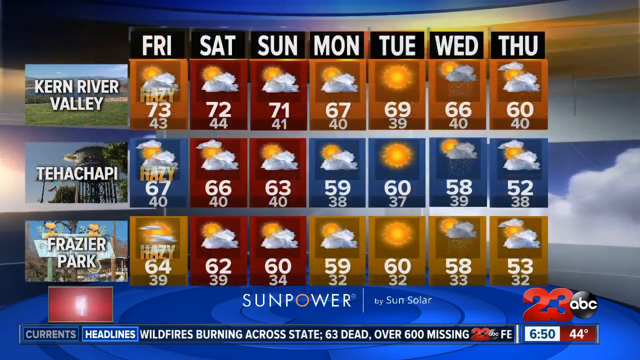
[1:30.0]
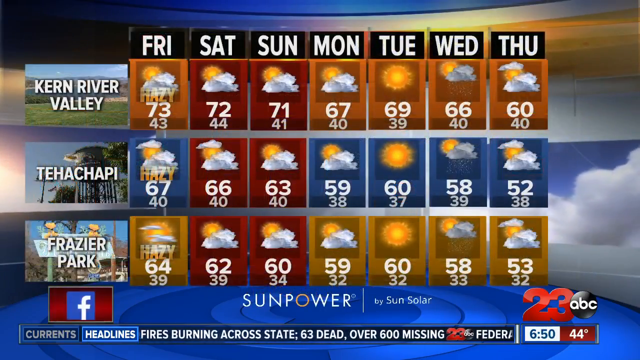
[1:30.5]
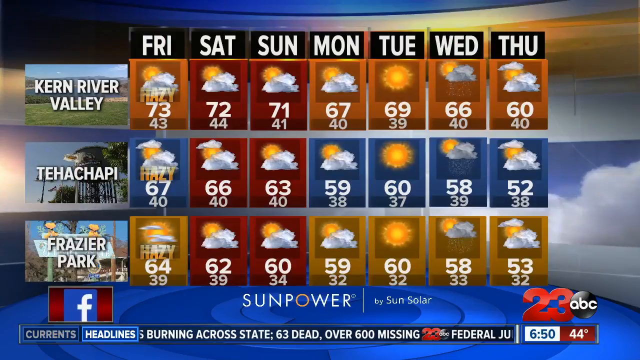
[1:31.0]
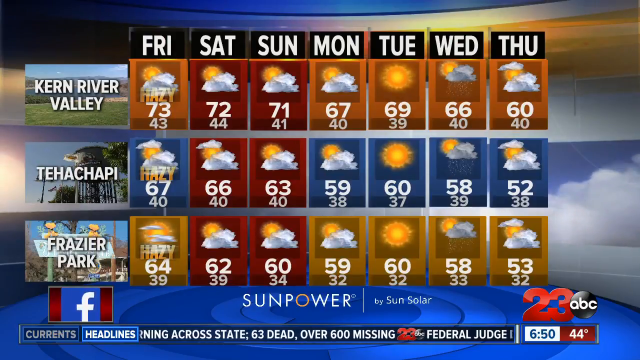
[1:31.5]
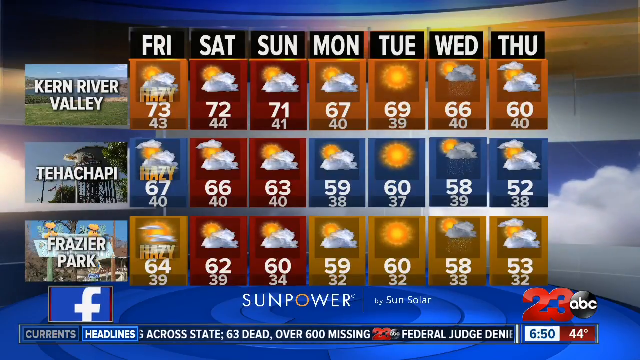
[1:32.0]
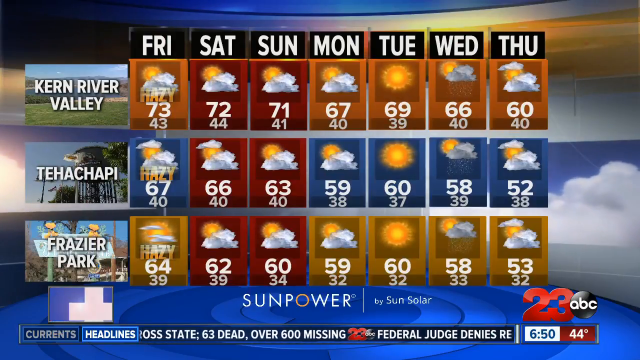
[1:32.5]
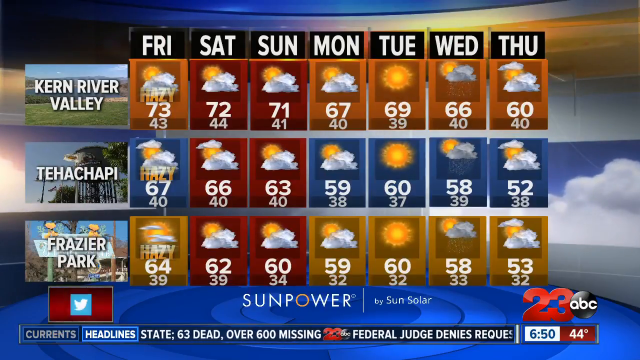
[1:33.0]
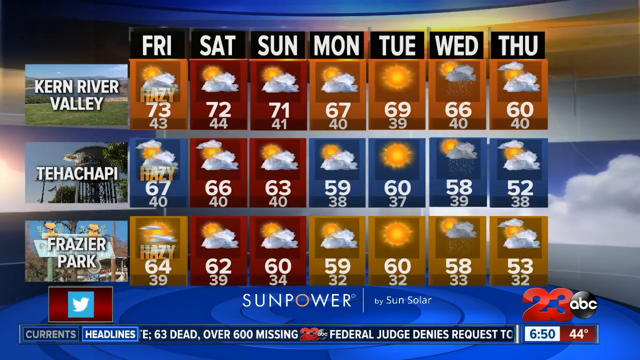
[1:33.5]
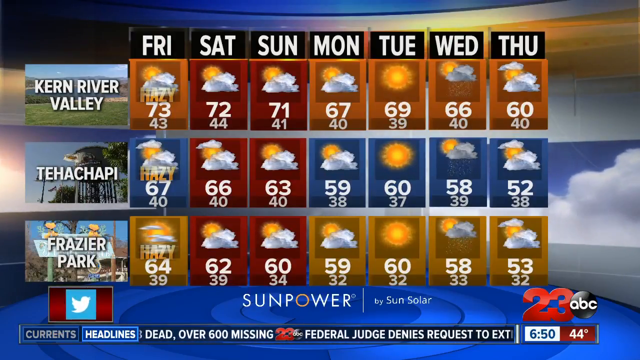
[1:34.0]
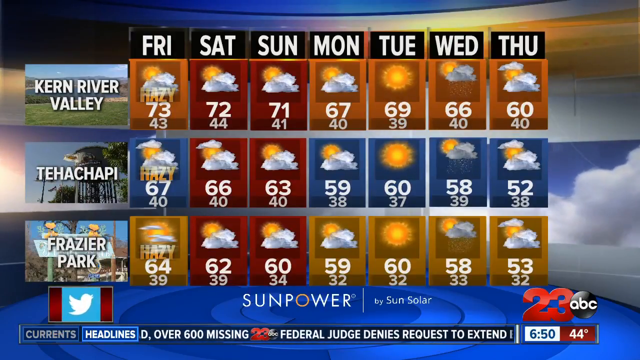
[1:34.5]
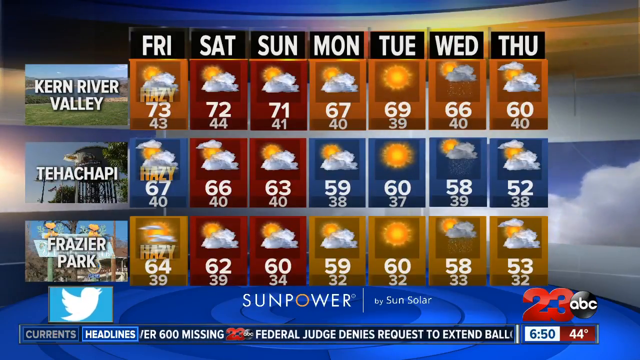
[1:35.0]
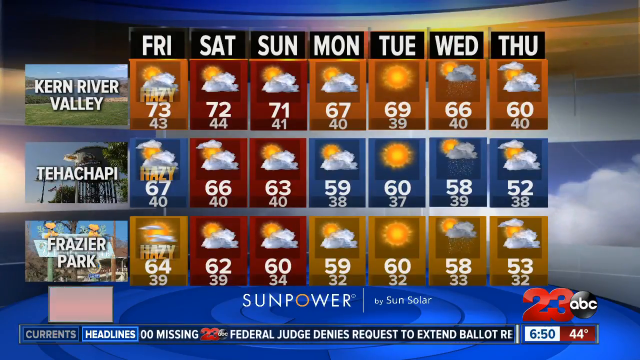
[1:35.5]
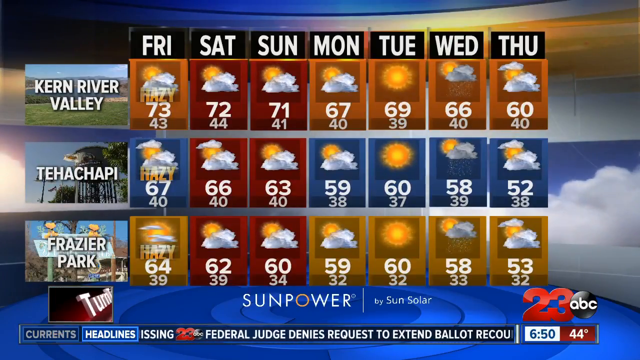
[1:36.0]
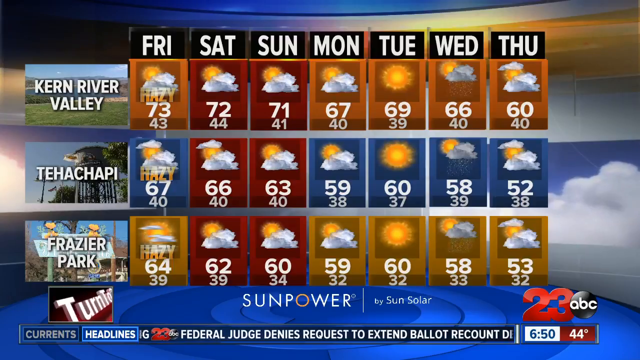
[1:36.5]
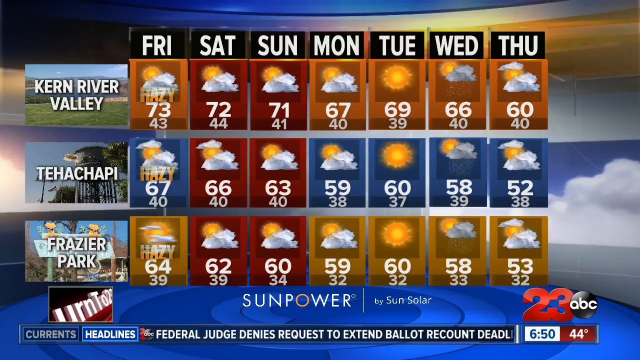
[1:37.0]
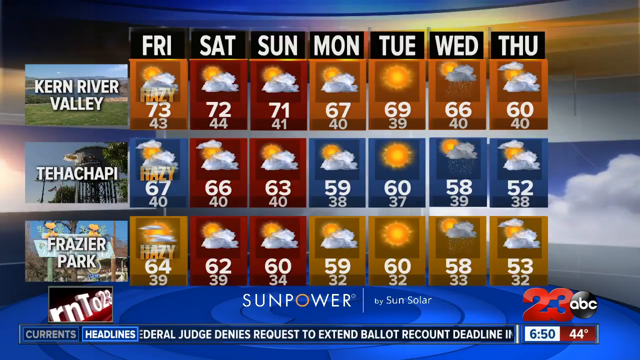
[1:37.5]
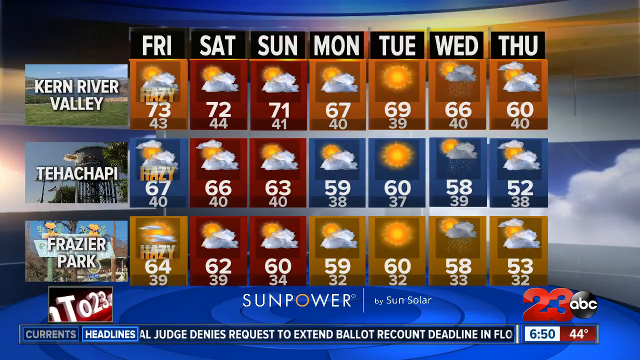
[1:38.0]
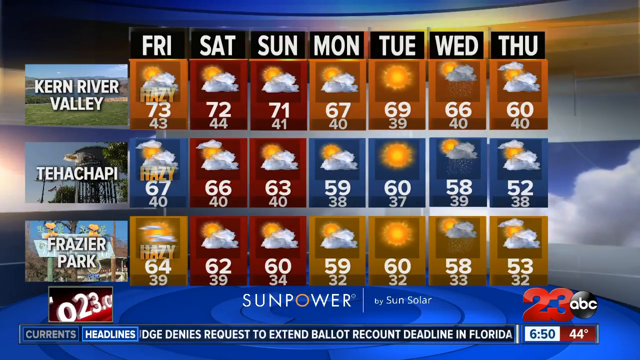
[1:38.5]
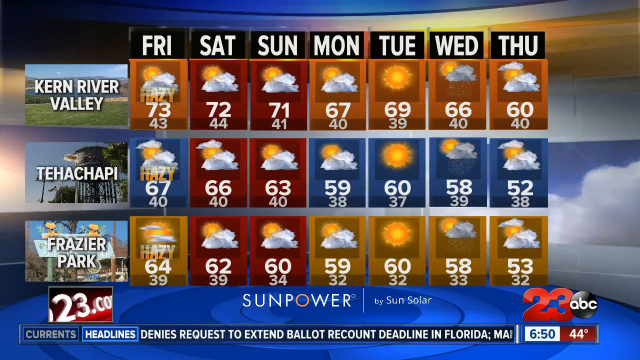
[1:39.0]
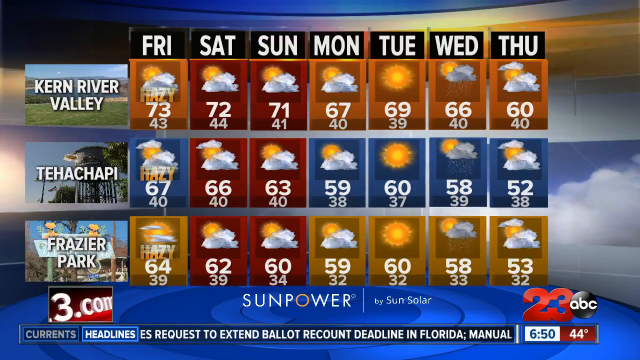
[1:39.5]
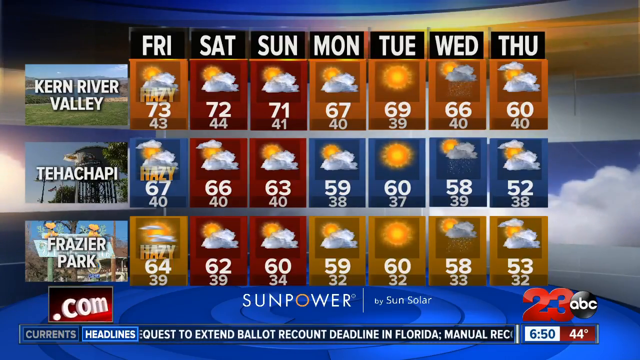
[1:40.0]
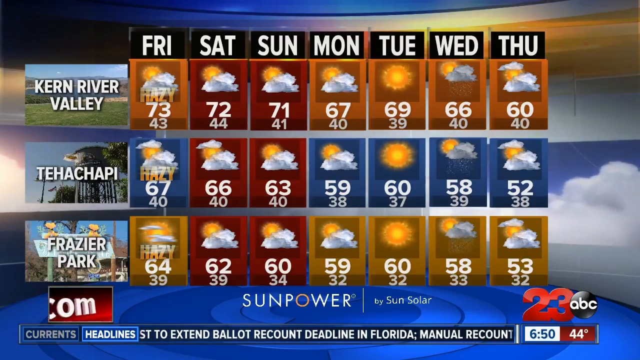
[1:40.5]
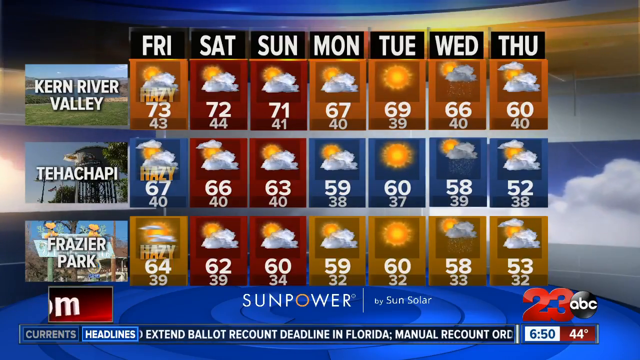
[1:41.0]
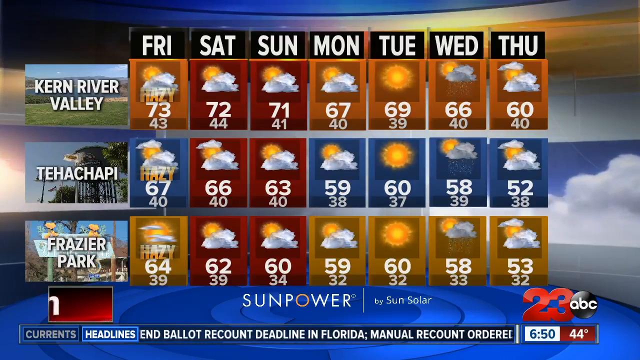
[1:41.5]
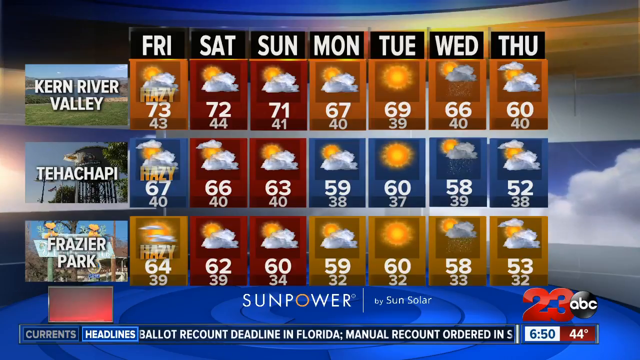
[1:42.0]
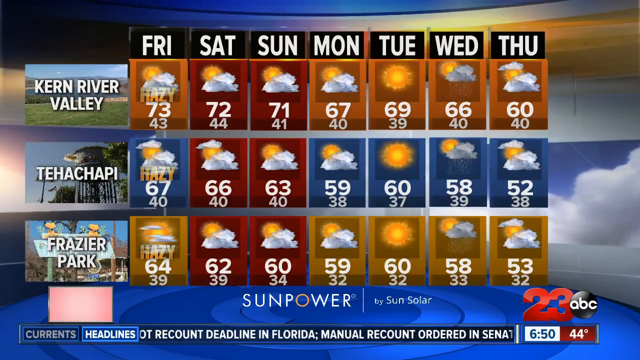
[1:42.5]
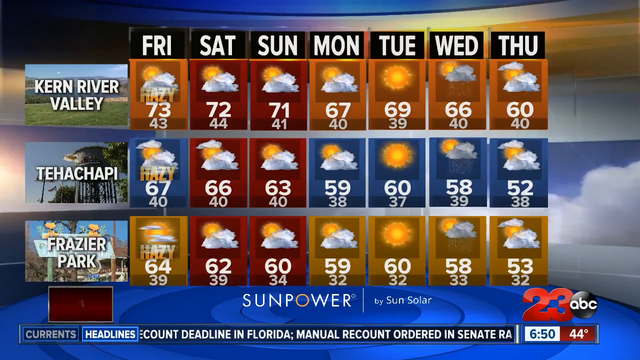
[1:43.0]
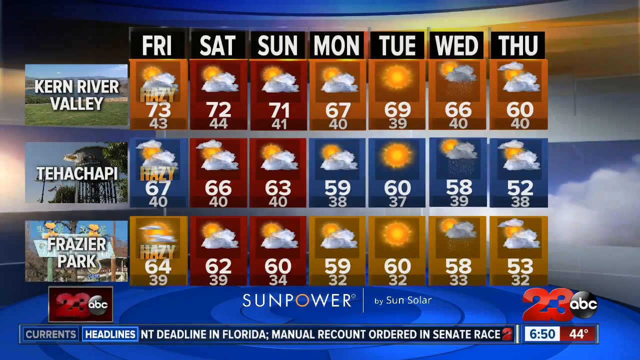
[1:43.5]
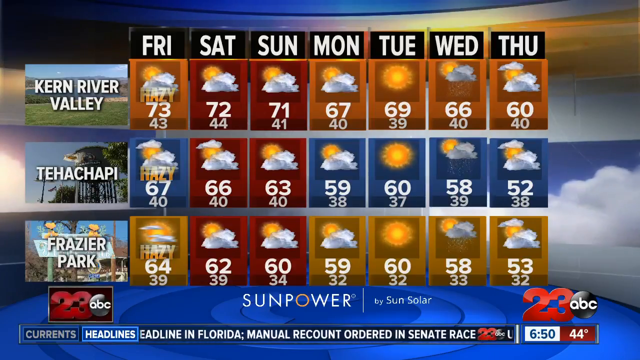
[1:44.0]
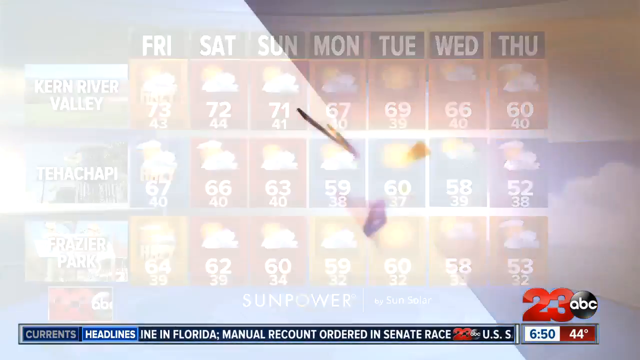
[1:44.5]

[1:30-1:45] The graphic changes to three separate weekly forecasts for Kern River Valley, Tehachapi and Fraser Park. Each city has its own row of highs and lows, running from left to right beginning with Friday. The female news anchor is still off screen, leaving all the weather cards visible. In the background are blue, yellow and white circular and curved graphics, along with 3D graphics of clouds. Beneath the three forecasts is a sponsor reading "SunPower by SunSolar." The sliding lower-third graphic continues, reading "Federal judge denies request to extend ballot recount deadline in Florida. Manual recount ordered in Senate race." A very bright flash transition occurs, and graphics zoom toward the viewer at a fast rate.